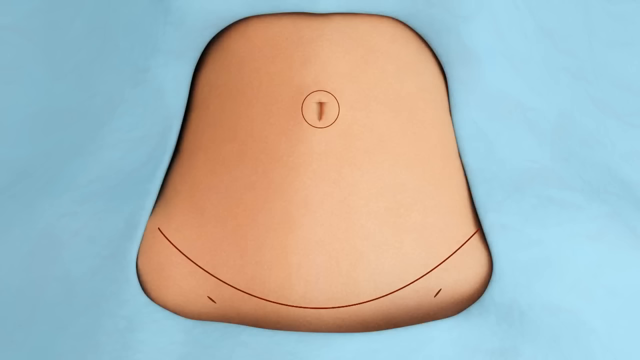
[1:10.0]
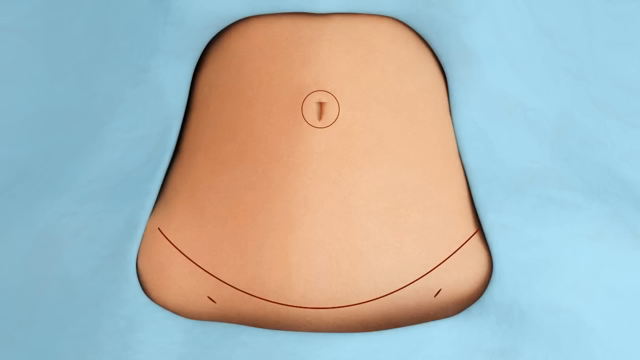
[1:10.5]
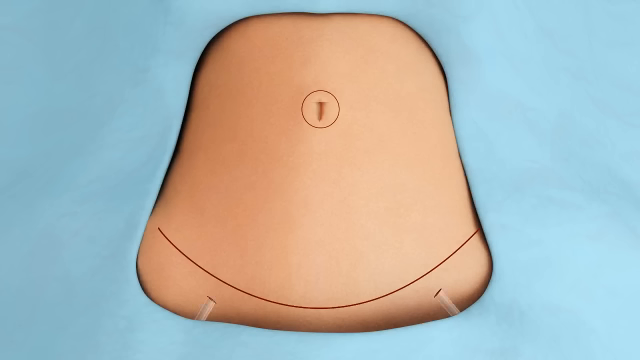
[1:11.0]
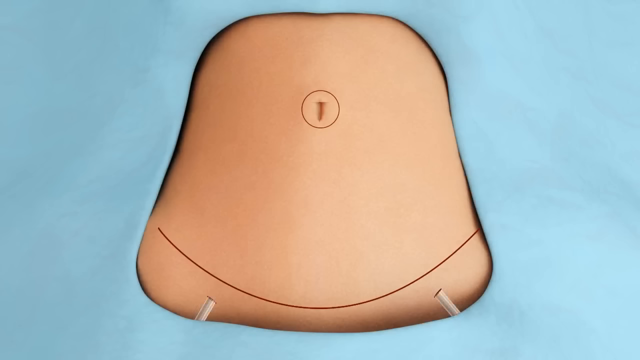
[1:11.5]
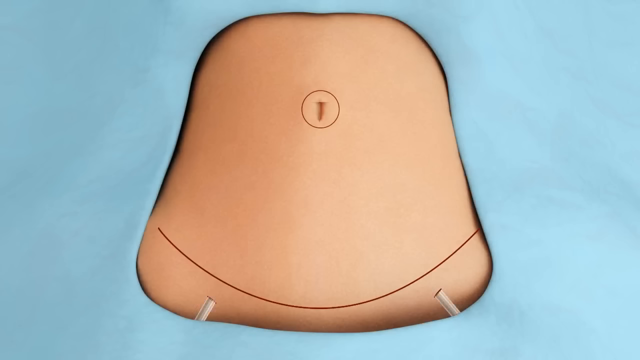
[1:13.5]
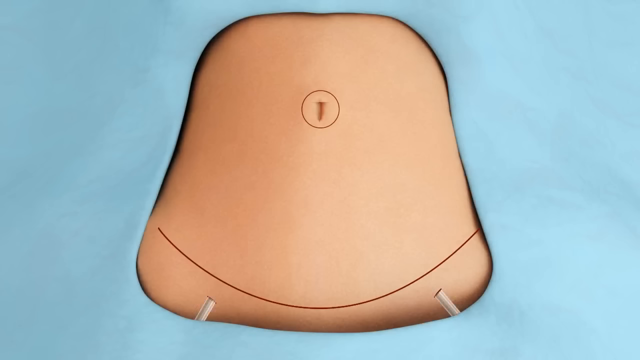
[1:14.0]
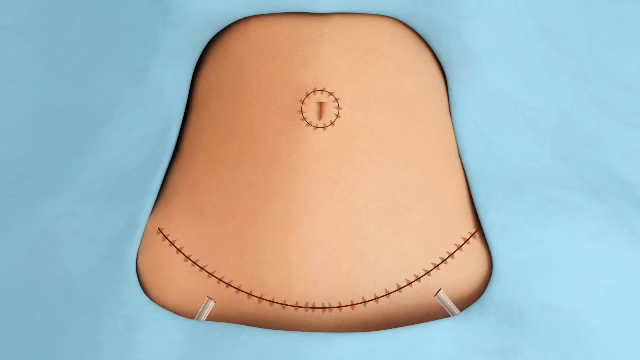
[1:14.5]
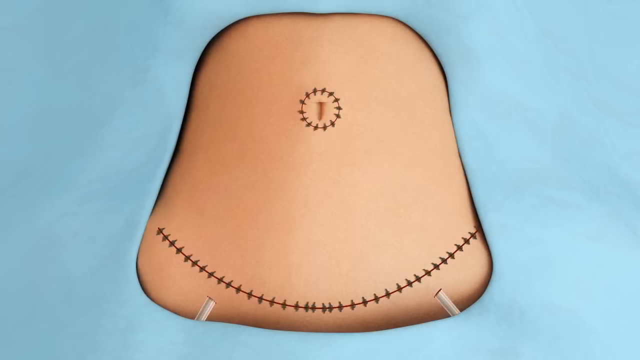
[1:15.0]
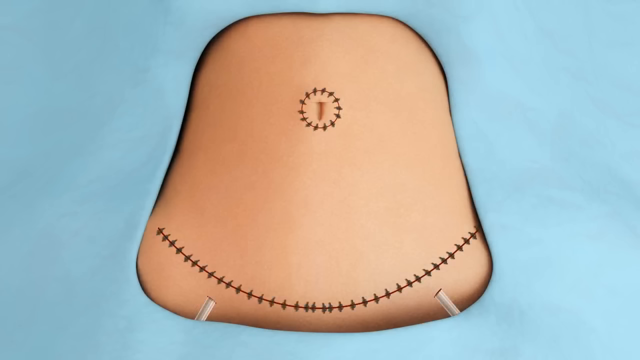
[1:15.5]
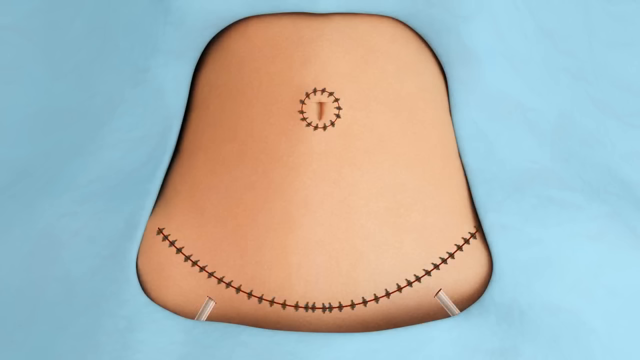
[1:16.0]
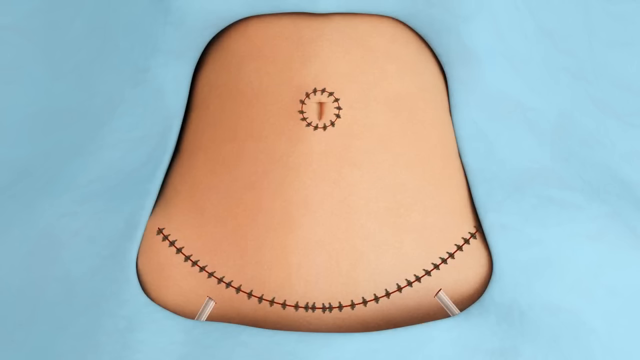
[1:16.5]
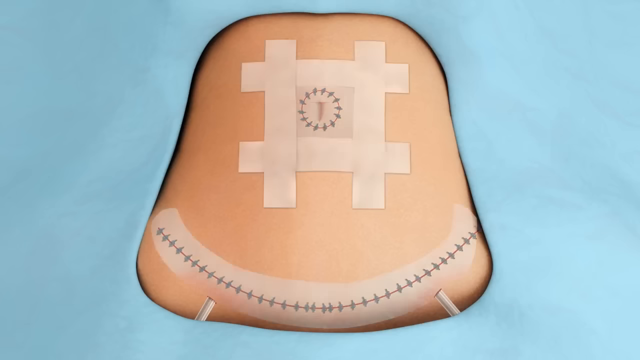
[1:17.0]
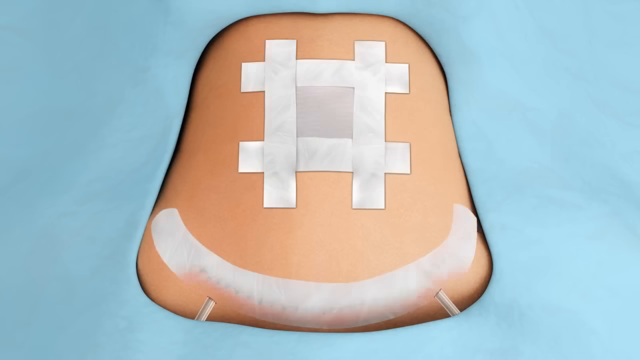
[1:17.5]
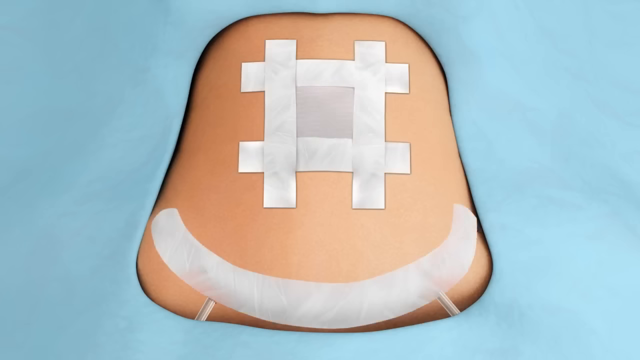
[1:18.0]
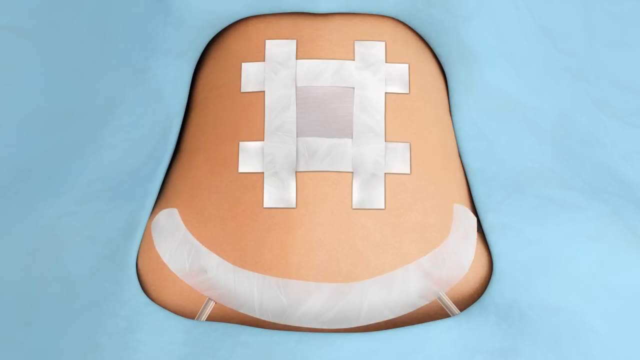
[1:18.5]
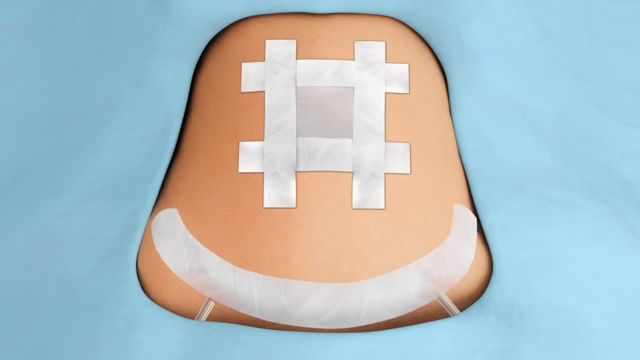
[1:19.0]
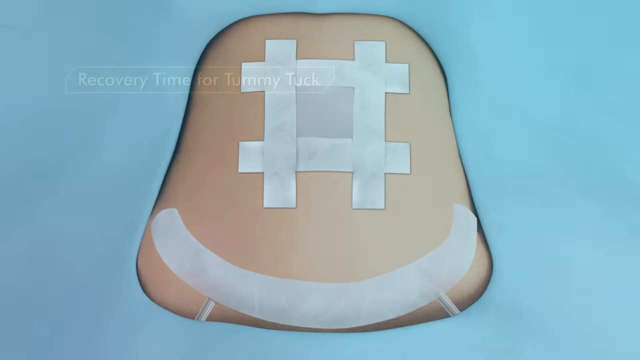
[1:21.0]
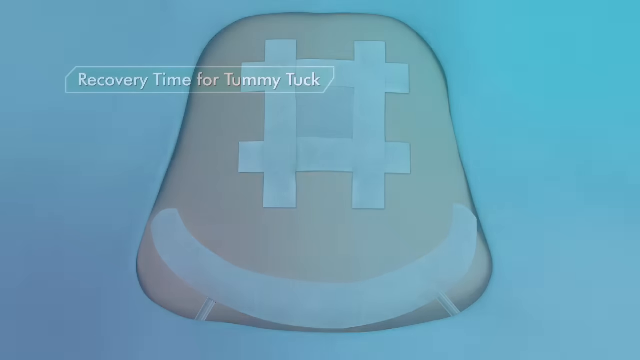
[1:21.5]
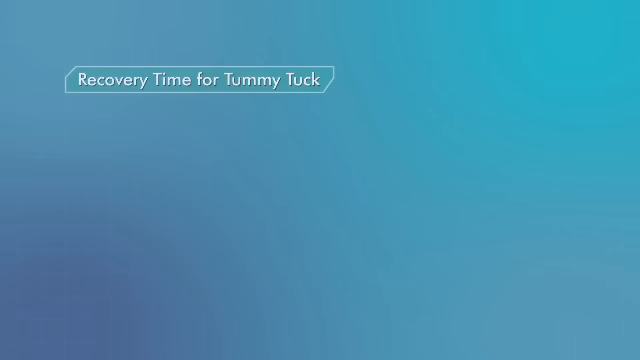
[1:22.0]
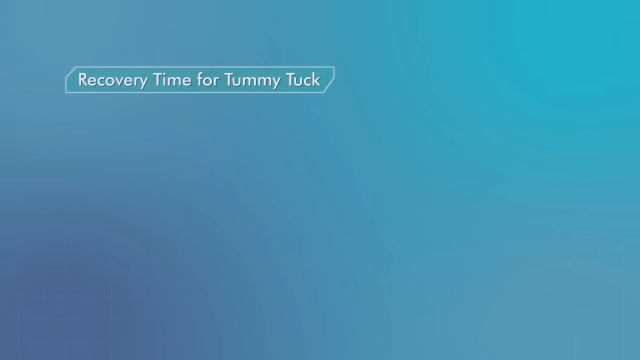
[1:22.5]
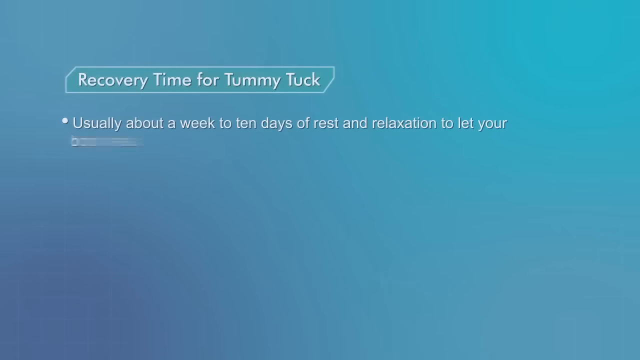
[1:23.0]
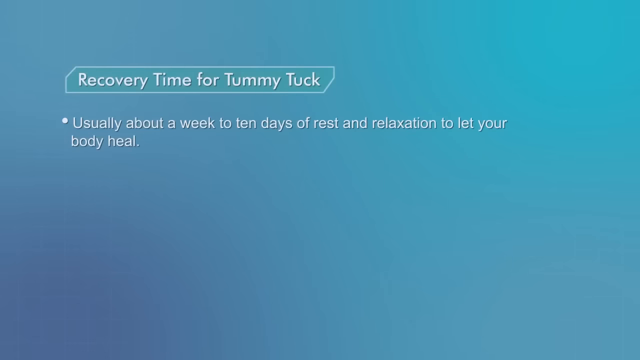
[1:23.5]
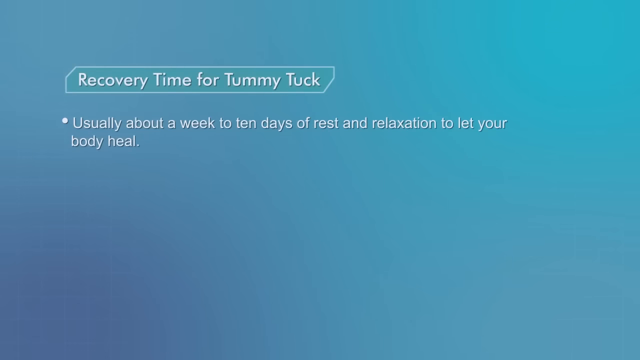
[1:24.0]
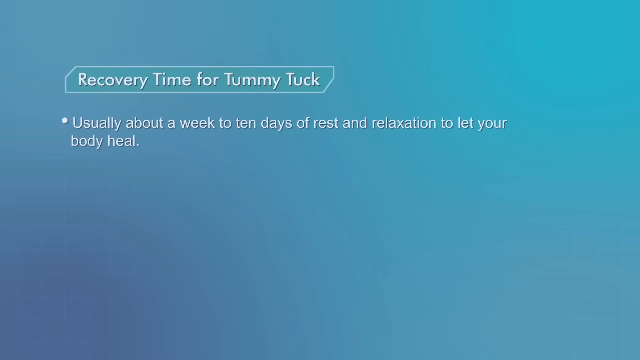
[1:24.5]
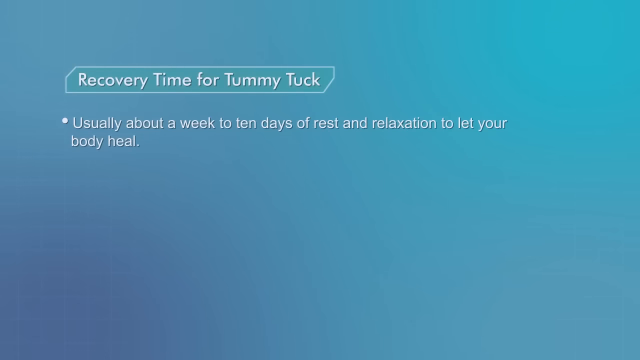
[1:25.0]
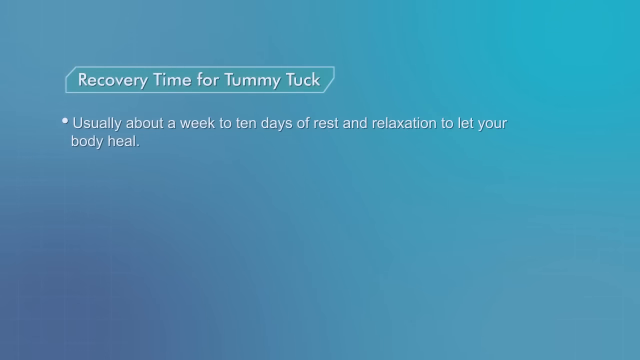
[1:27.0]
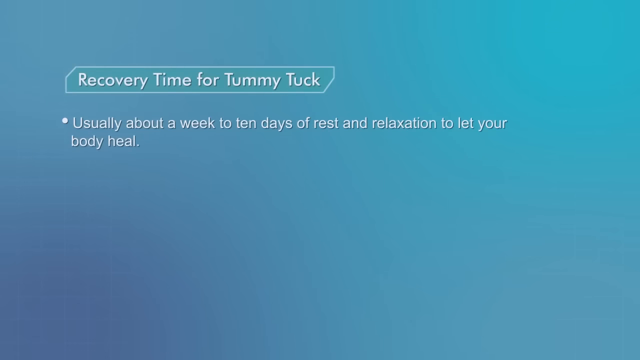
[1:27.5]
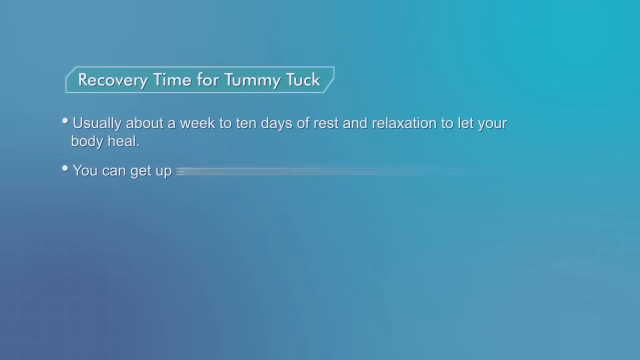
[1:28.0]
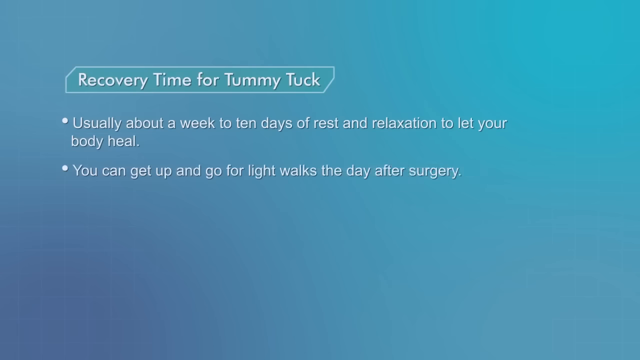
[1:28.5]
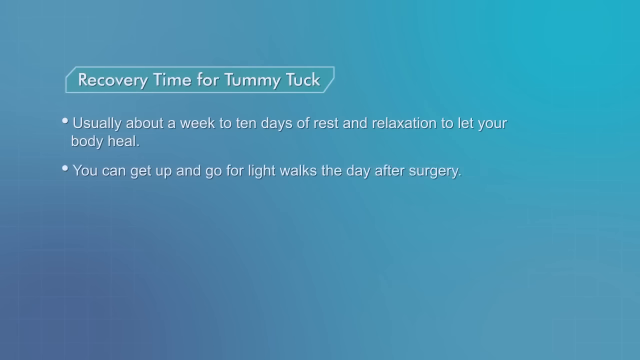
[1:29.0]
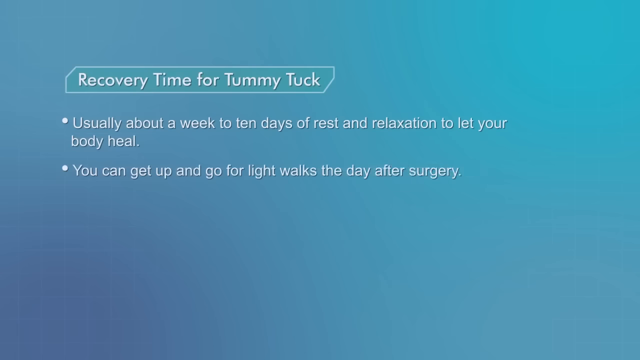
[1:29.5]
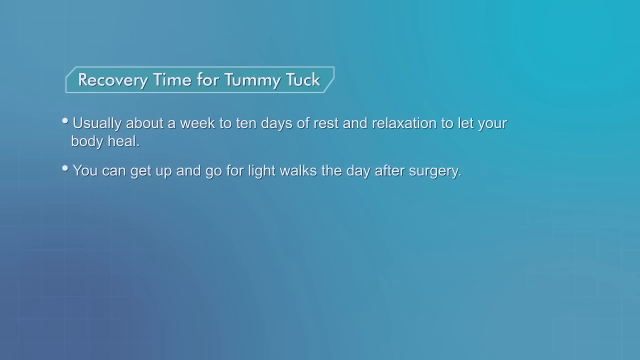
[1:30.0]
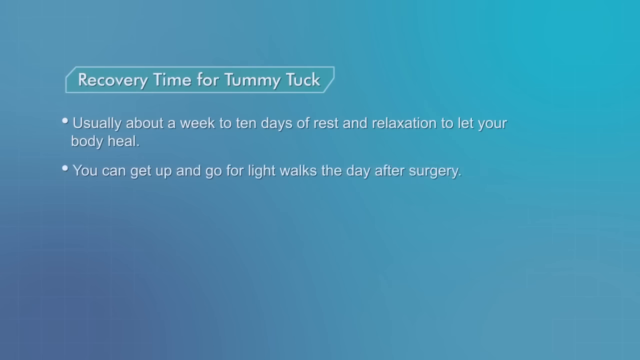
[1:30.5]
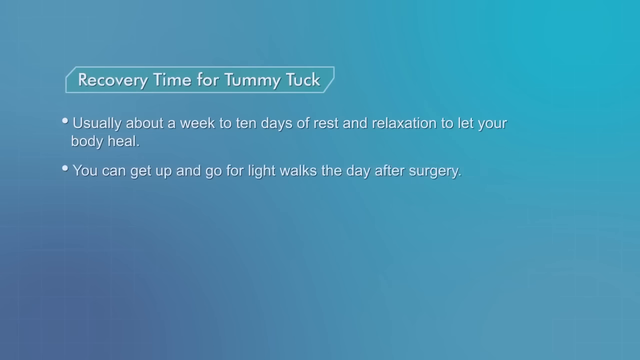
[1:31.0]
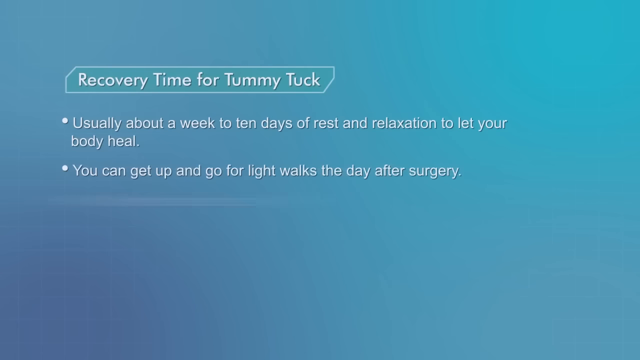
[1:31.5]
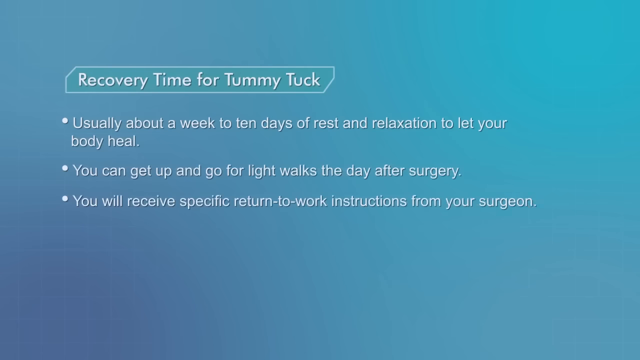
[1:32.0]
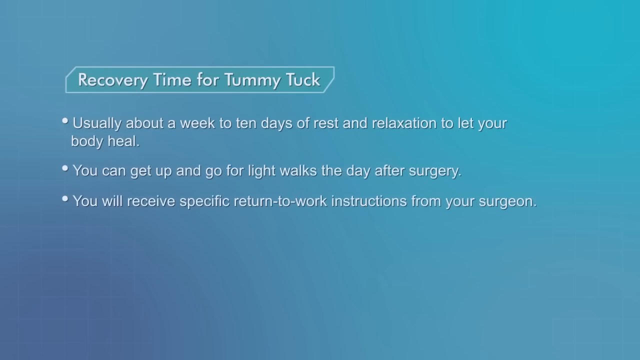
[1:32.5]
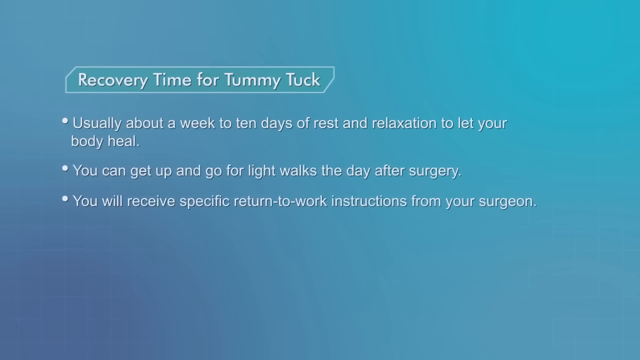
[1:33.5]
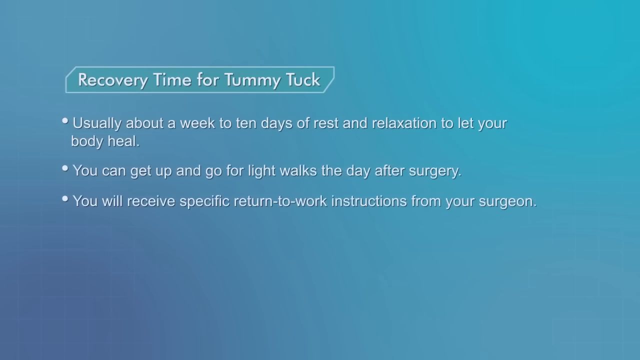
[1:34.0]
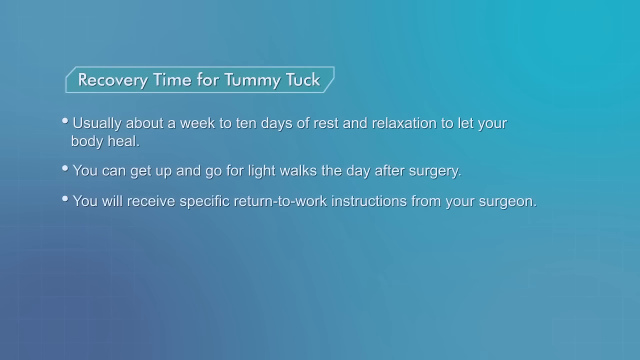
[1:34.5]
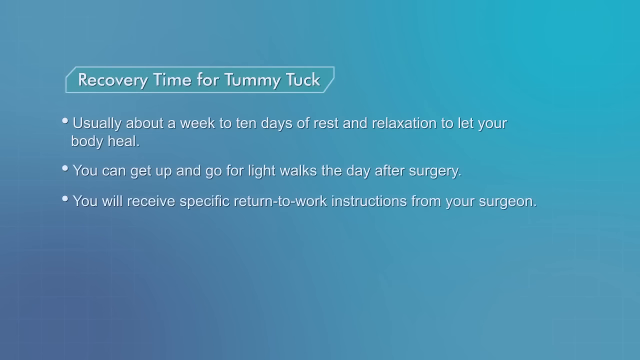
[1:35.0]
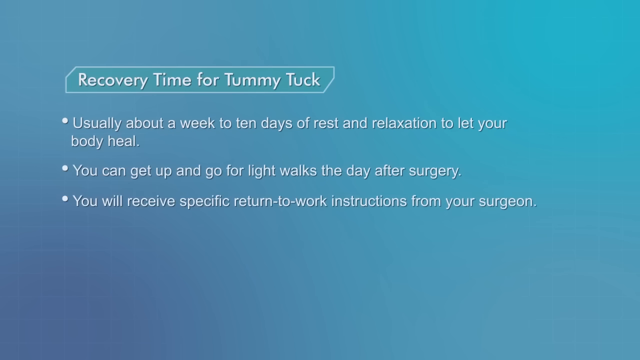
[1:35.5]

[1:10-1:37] Two little lines are drawn underneath the bent line on the lower belly, and white clear pipes, apparently drainage pipes, are inserted into these little holes. Sutures are put in on the line around the belly button, shown as thick black little lines crossing the circle. Along the bent line across the bottom of the abdomen, sutures are placed about 10 centimeters apart from one side to the other. Bandages are then placed: over the bottom wound, a sticky gauze-like bandage in the shape of the wound; over the belly button, four strips and a square piece in the middle, with a horizontal strip at the top and bottom and a vertical strip on each side forming a square window. Pointers on recovery time for a tummy tuck then appear, stating usually about a week to 10 days of rest and relaxation to let the body heal, that light walks are possible the day after surgery, and that specific return-to-work instructions come from the surgeon.